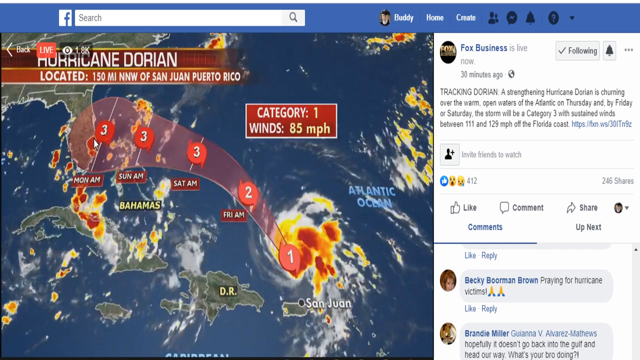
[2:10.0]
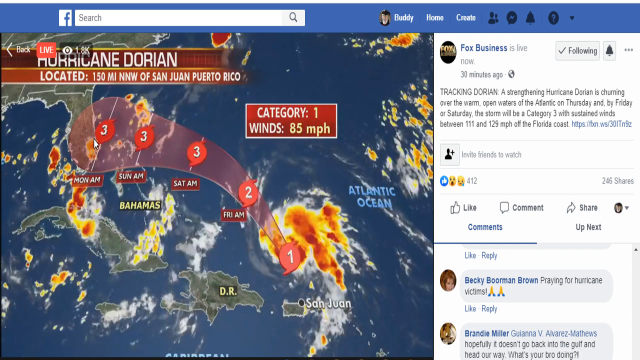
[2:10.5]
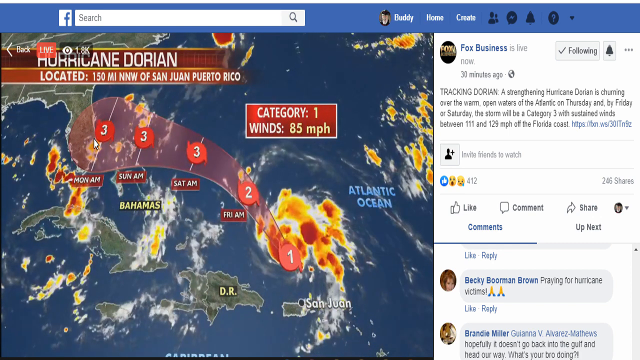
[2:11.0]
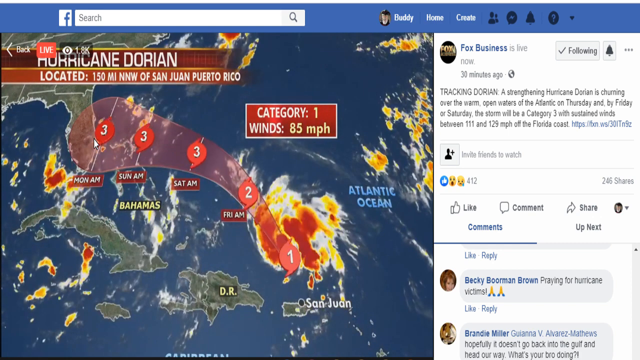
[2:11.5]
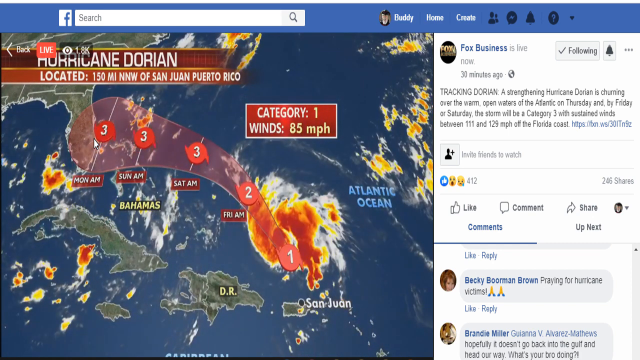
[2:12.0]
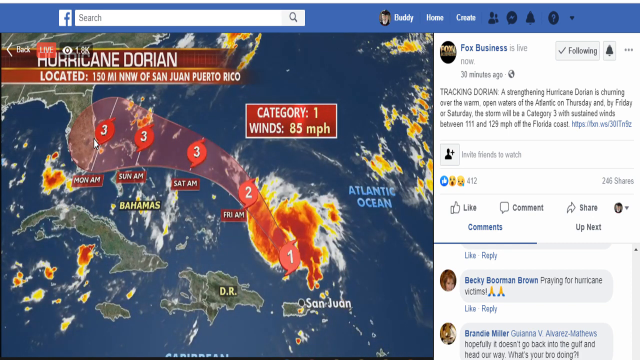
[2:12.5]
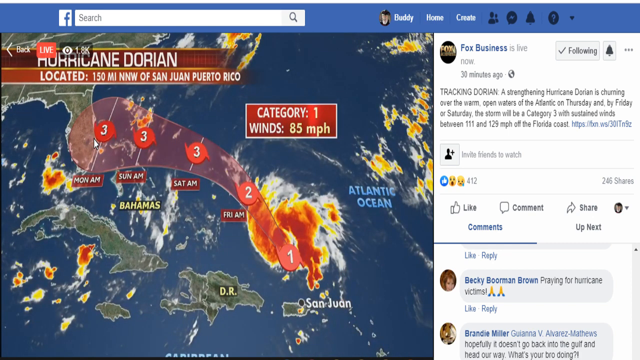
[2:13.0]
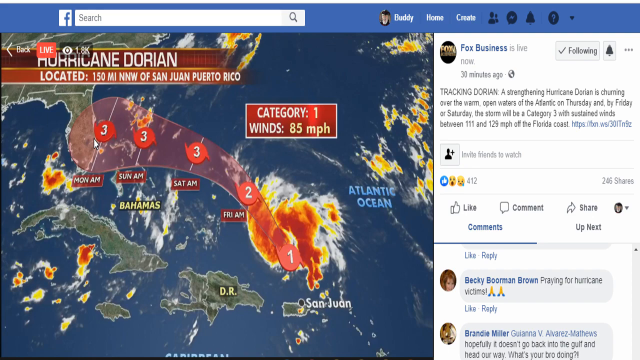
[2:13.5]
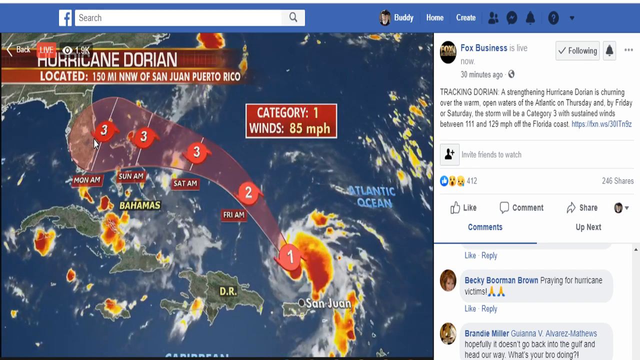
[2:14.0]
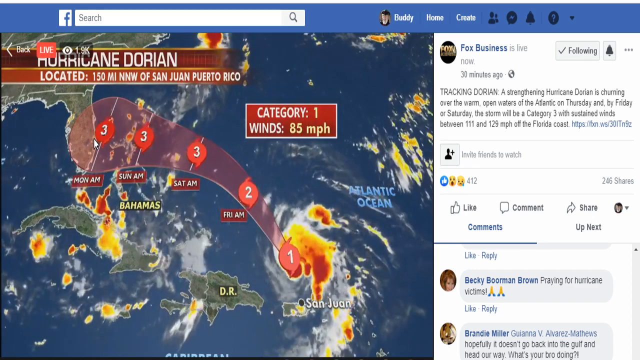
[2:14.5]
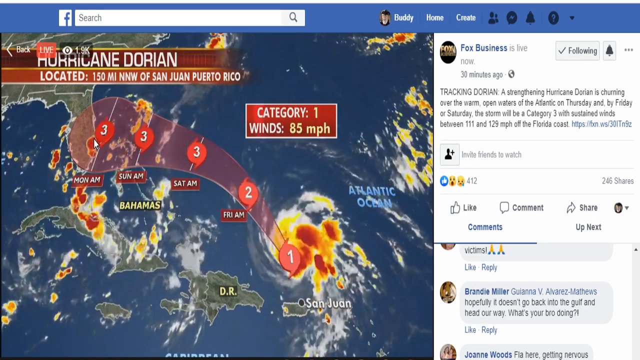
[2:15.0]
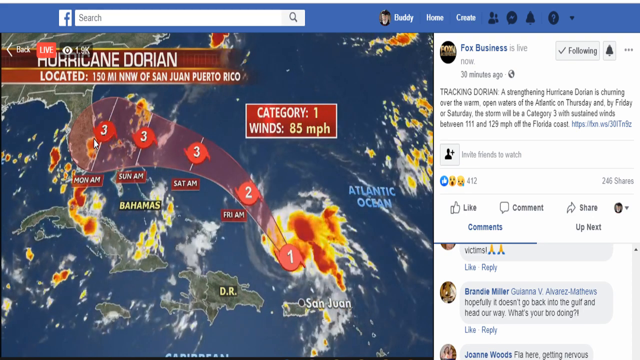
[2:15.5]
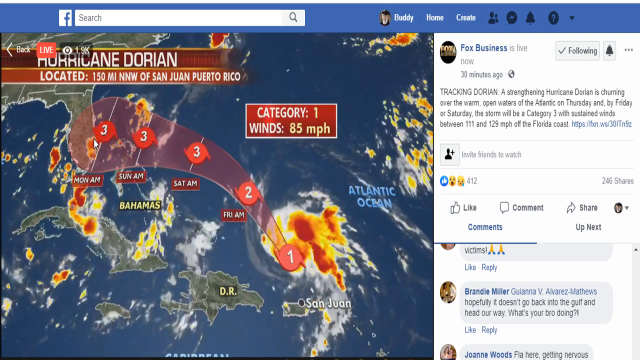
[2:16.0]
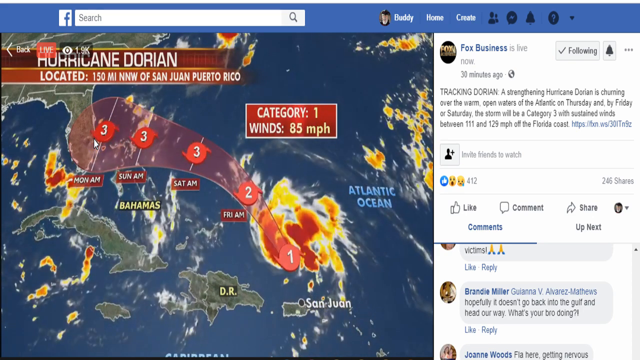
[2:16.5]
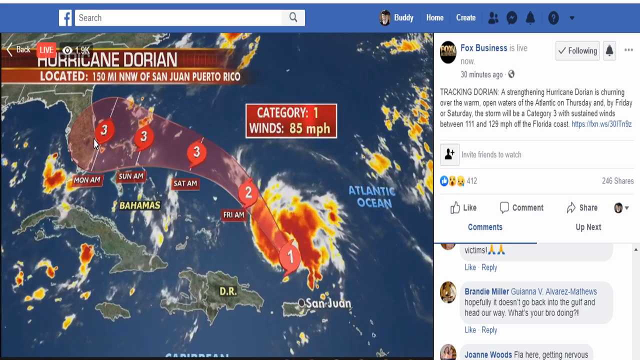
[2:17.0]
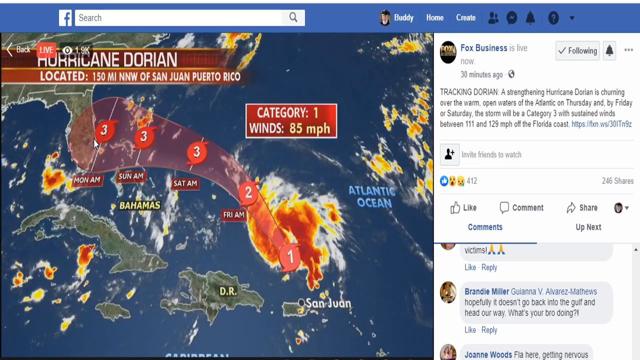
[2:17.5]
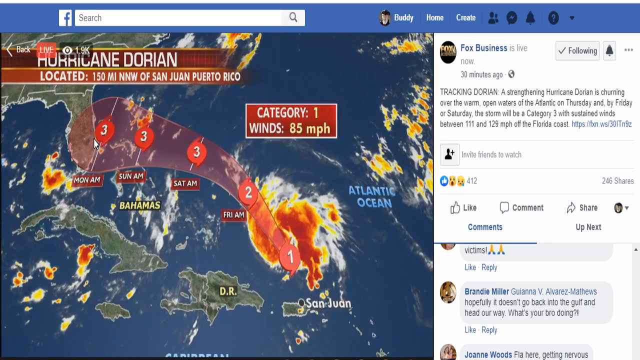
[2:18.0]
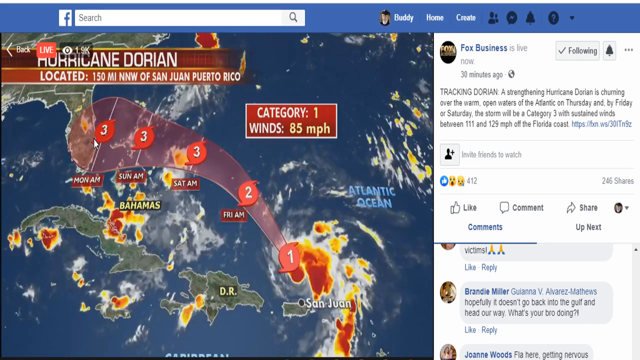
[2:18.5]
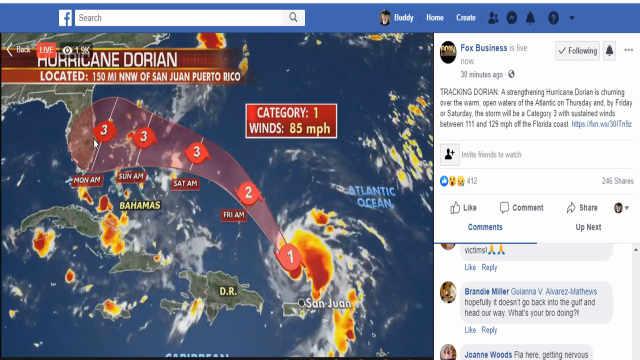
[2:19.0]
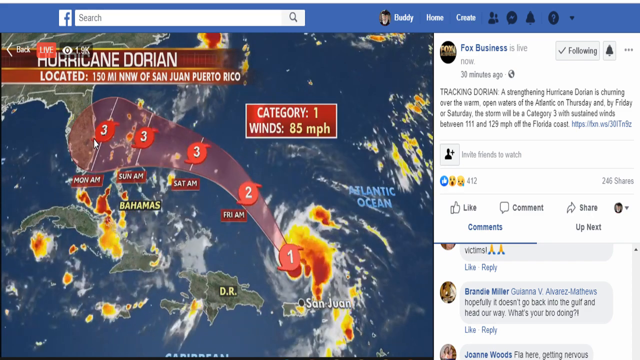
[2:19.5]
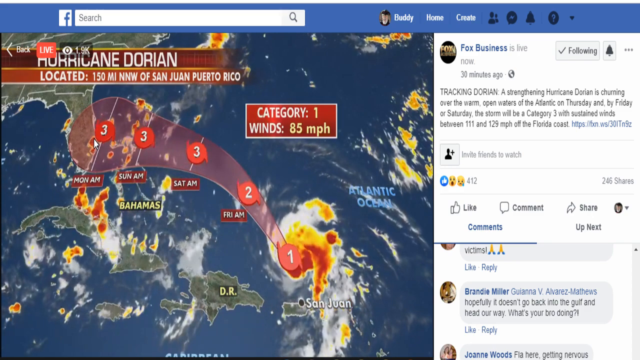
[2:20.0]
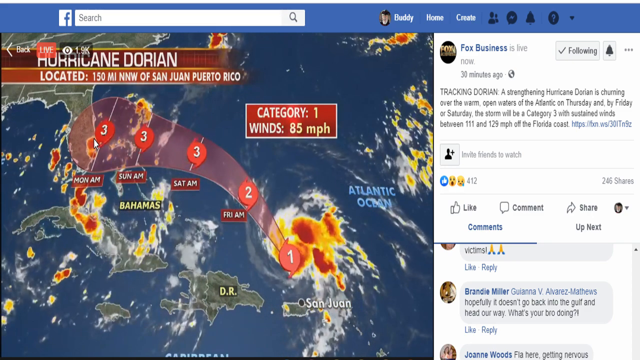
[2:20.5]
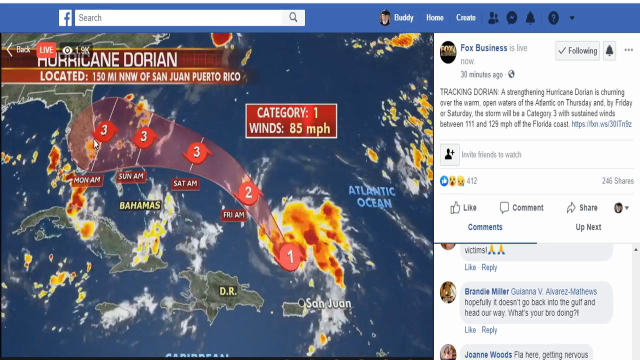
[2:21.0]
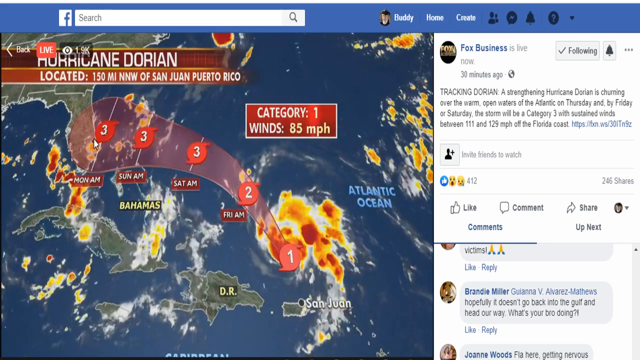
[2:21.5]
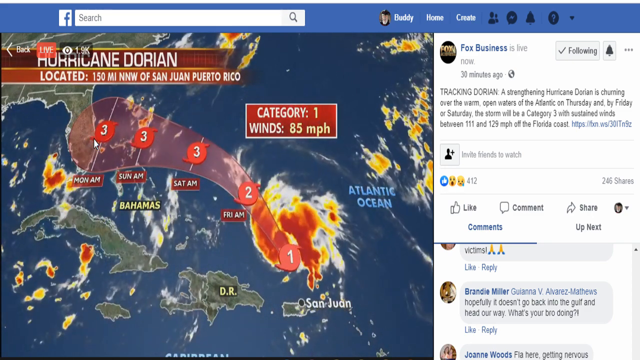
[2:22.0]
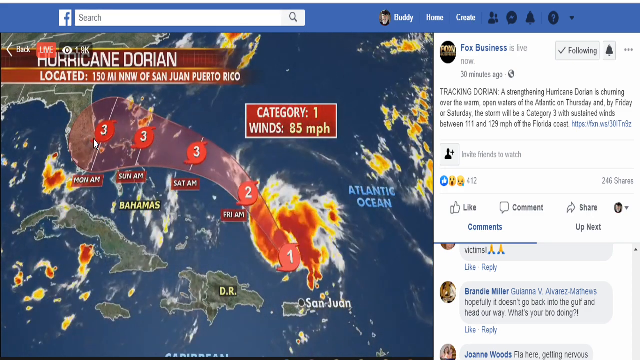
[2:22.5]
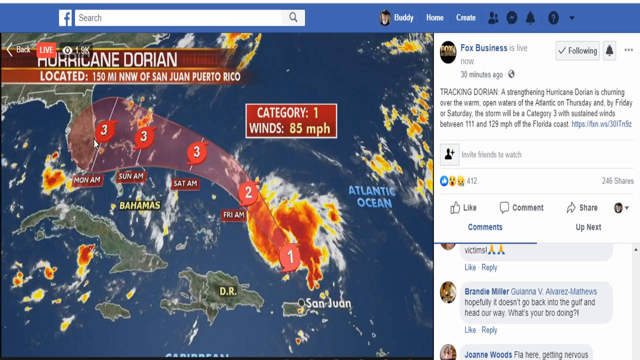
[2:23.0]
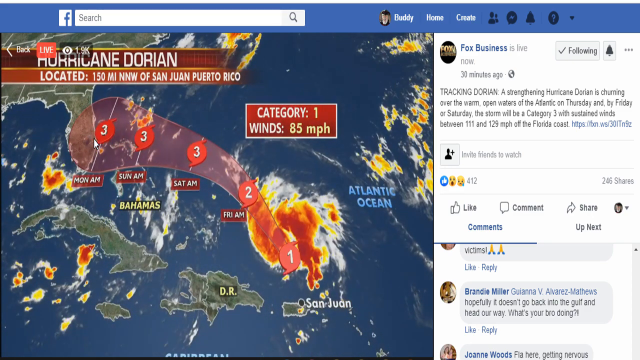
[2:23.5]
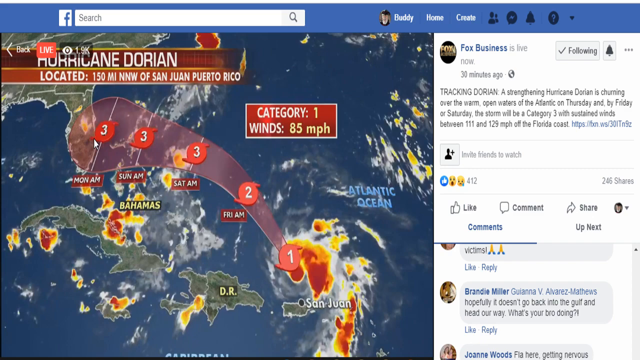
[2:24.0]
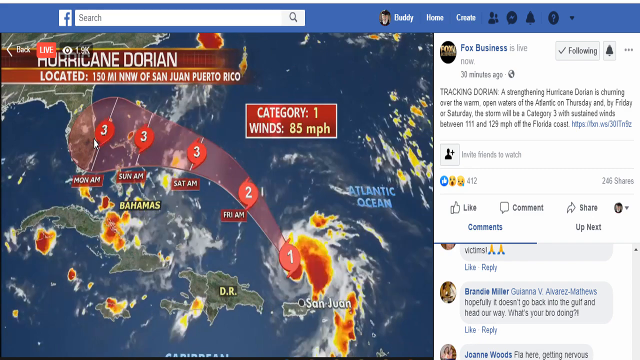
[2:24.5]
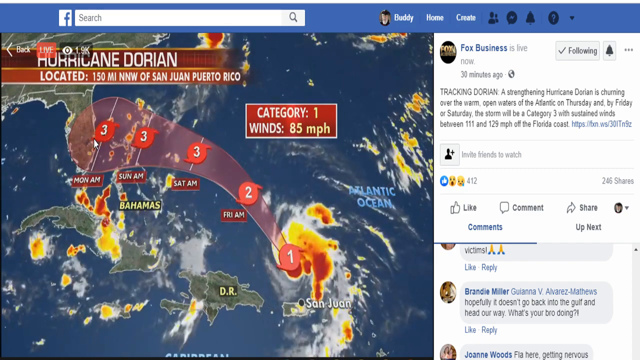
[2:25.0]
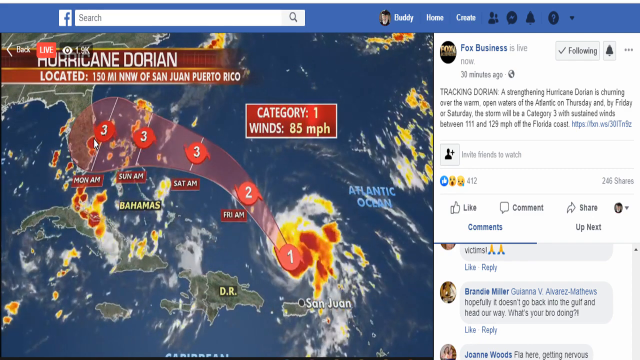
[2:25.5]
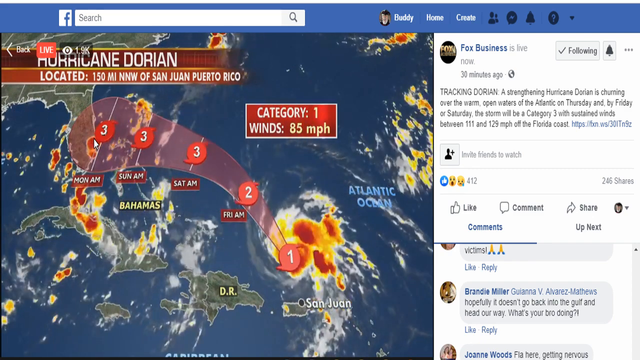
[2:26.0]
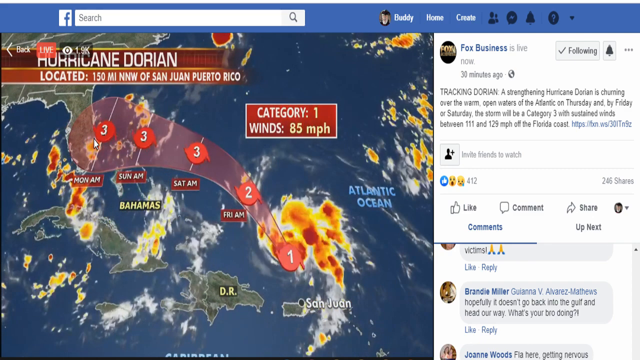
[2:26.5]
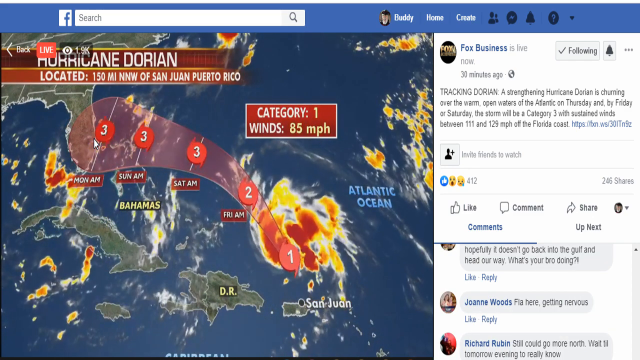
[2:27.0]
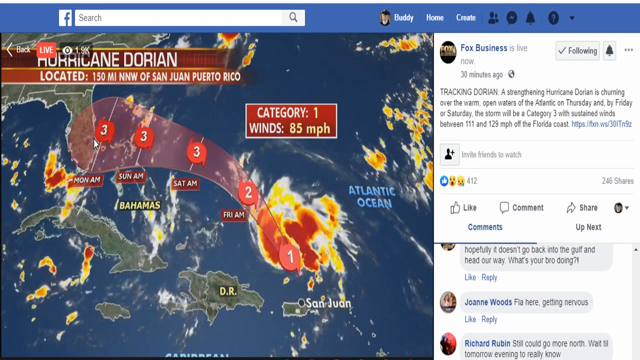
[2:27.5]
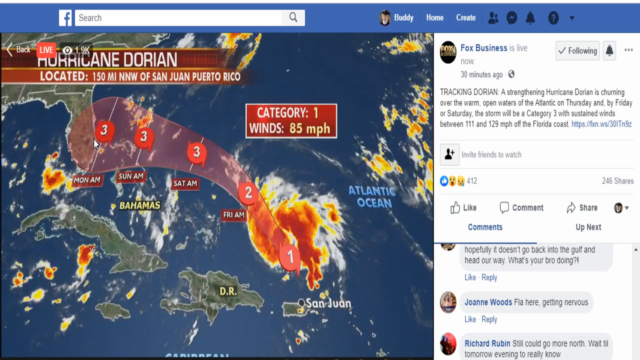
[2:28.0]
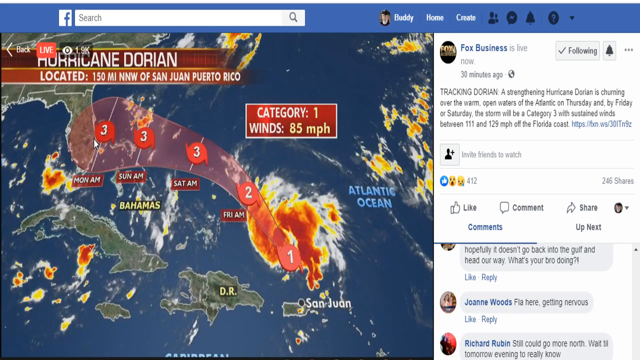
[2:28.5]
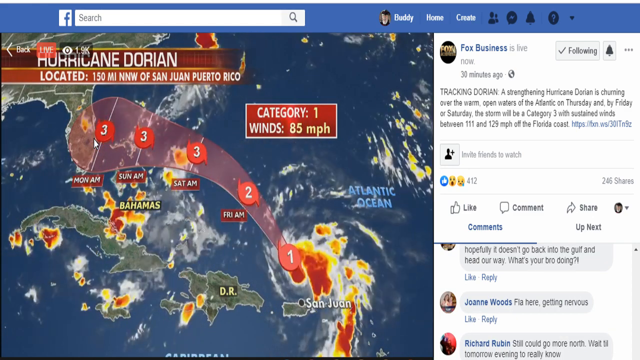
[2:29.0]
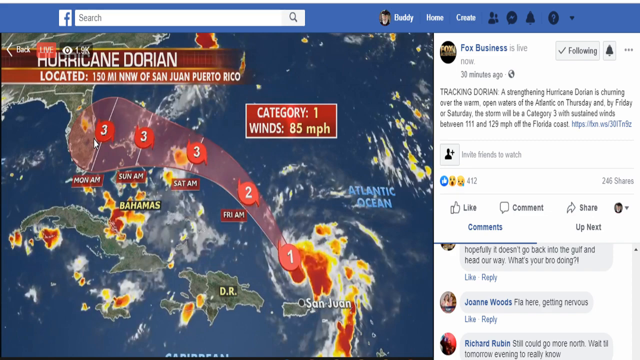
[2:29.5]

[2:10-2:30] The same Facebook Live image and loop continue as more comments come in. A person called Brandy Miller, apparently tagging a friend, writes "hopefully doesn't go back into the Gulf and head our way. What's your bro doing?!" A comment from Joanna Wood says "FLA here. How am I getting nervous?" A comment by Richard Rubin says "still could go more north. Wait till tomorrow evening to really know." The live stream seems quite minimal, showing just a predicted path of the hurricane alongside the comments.